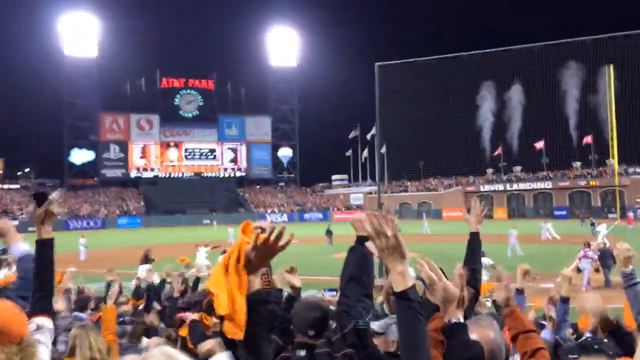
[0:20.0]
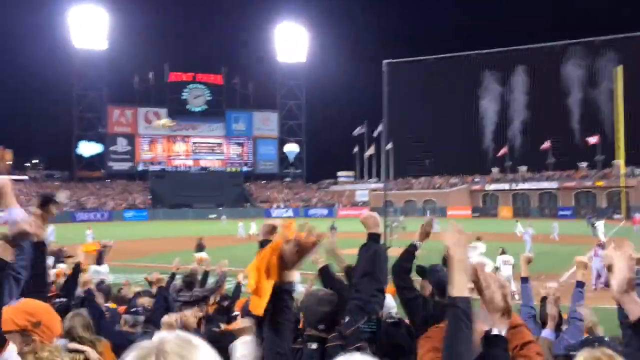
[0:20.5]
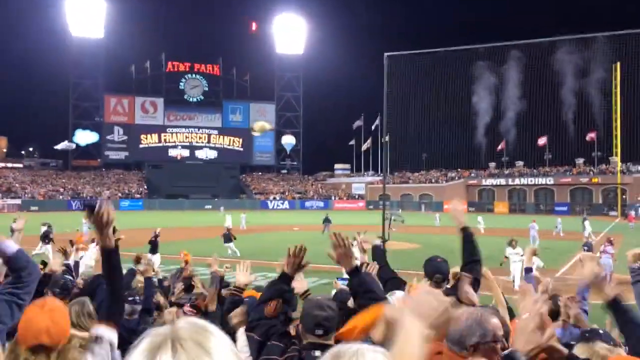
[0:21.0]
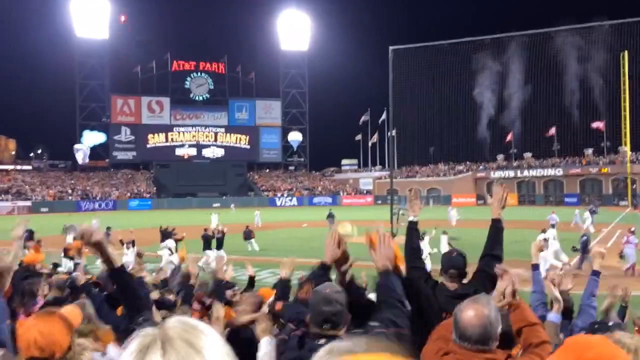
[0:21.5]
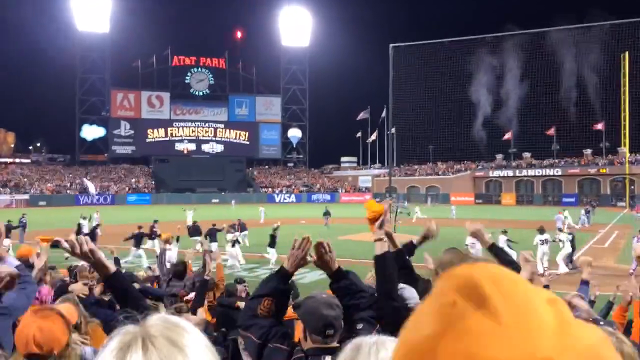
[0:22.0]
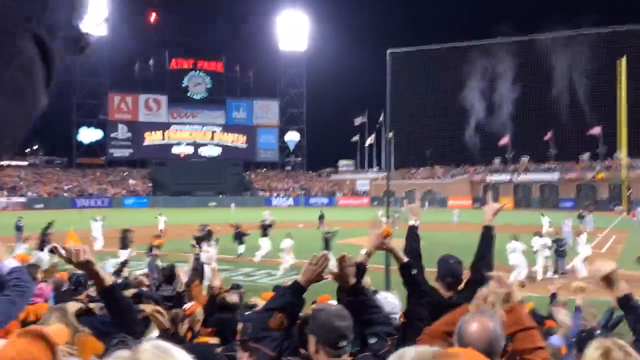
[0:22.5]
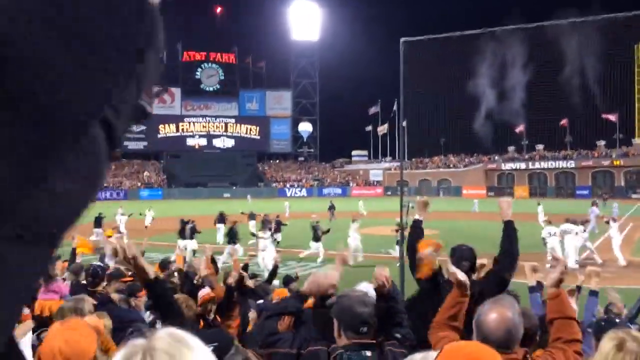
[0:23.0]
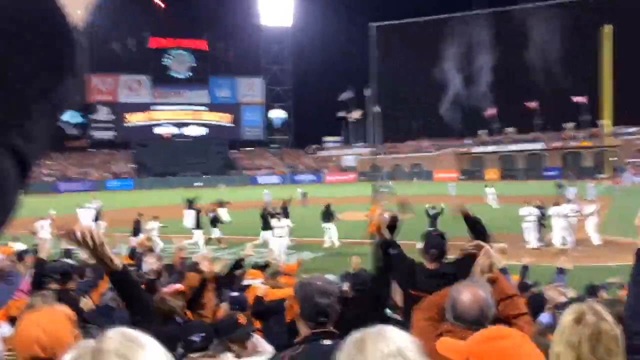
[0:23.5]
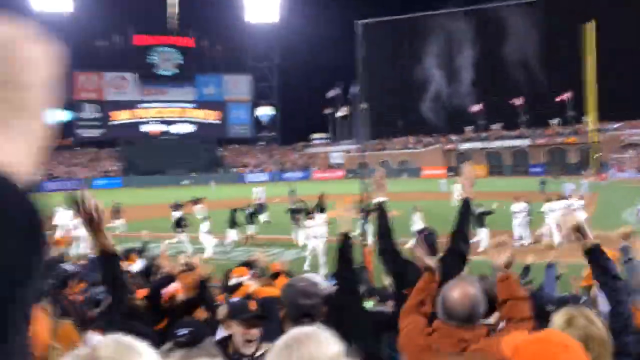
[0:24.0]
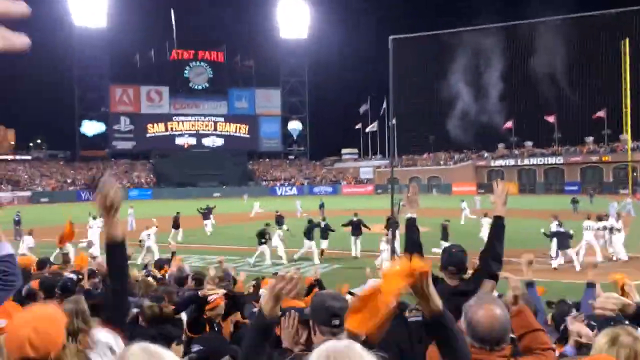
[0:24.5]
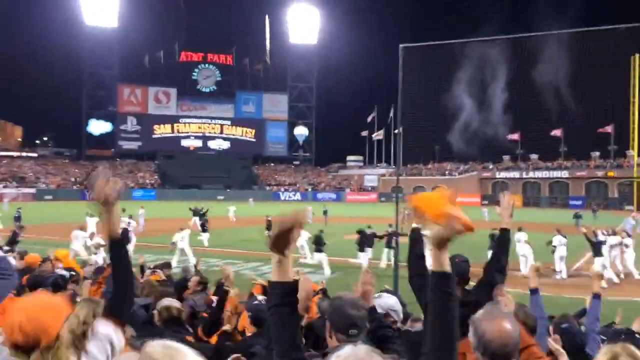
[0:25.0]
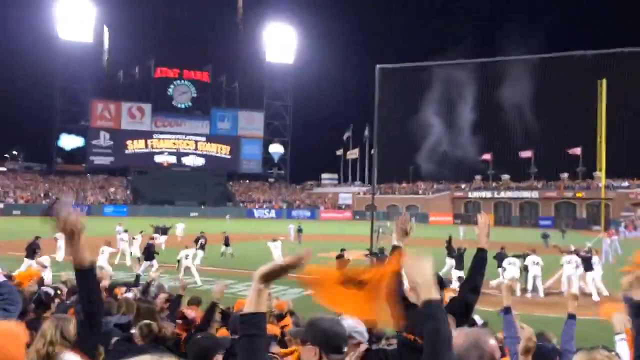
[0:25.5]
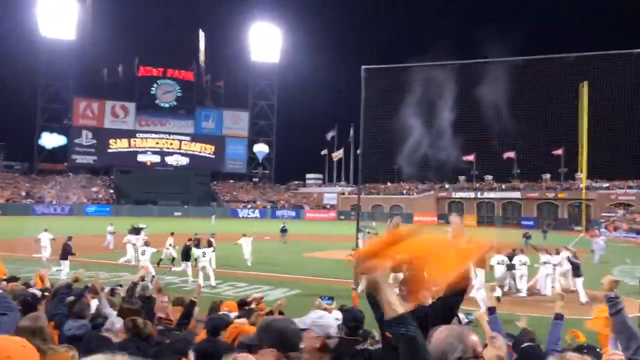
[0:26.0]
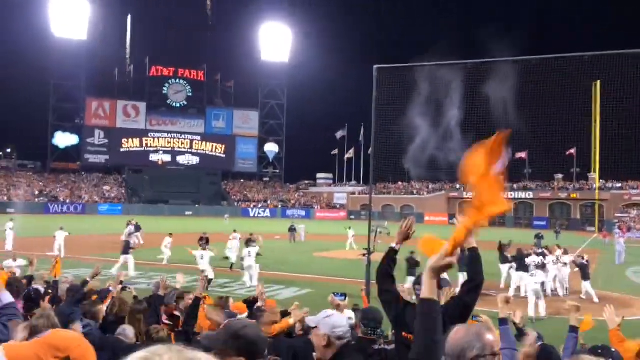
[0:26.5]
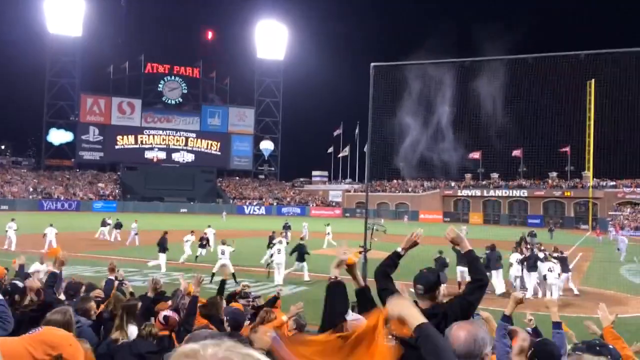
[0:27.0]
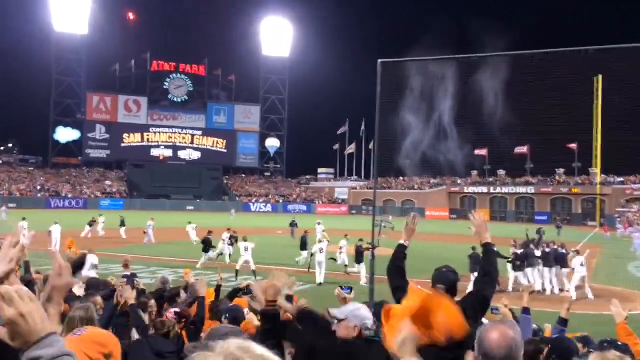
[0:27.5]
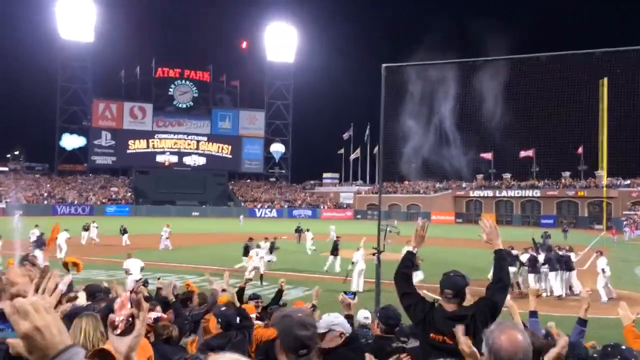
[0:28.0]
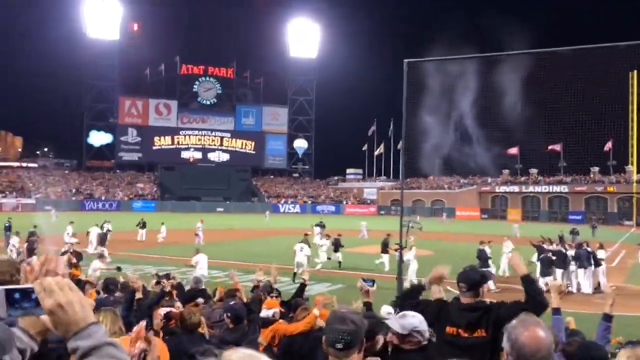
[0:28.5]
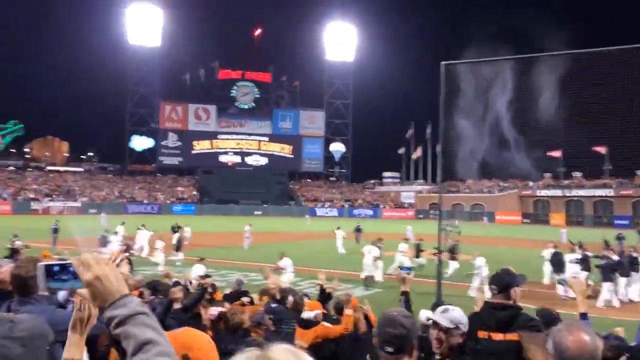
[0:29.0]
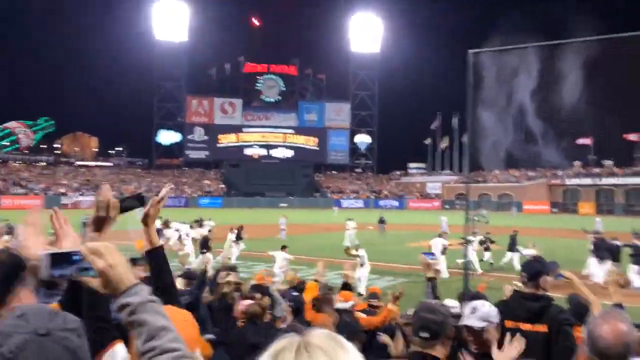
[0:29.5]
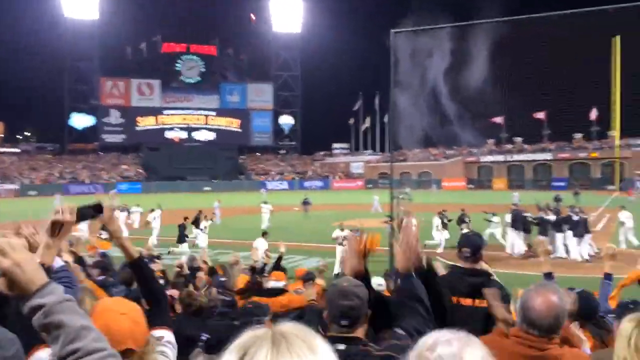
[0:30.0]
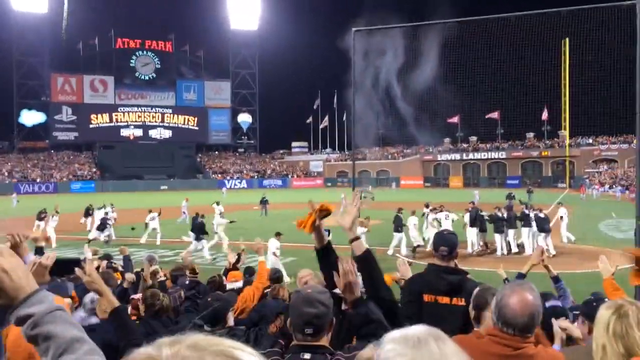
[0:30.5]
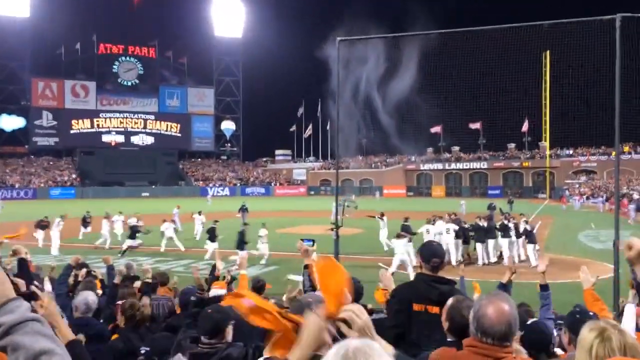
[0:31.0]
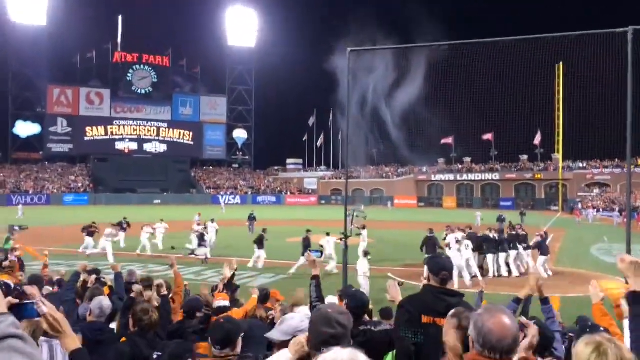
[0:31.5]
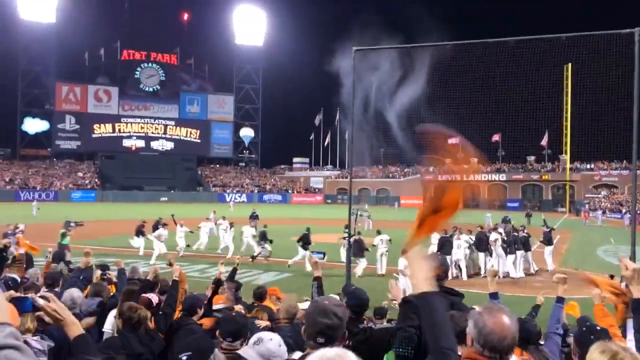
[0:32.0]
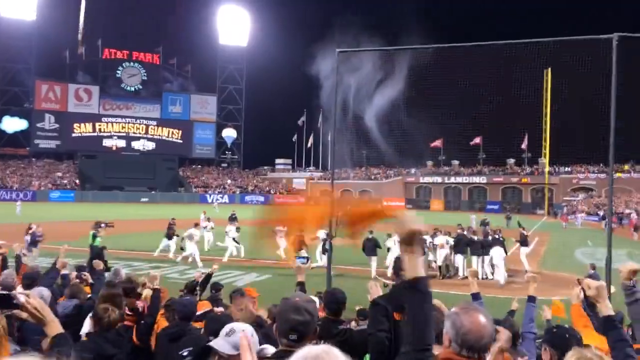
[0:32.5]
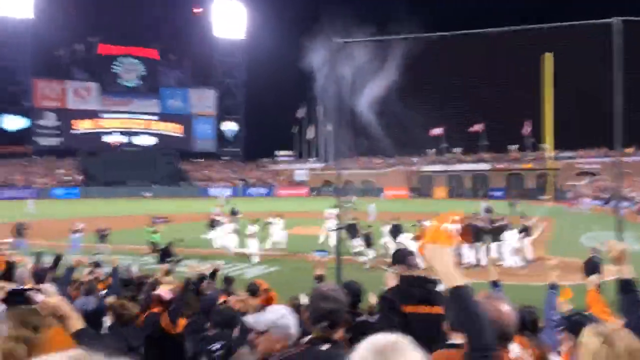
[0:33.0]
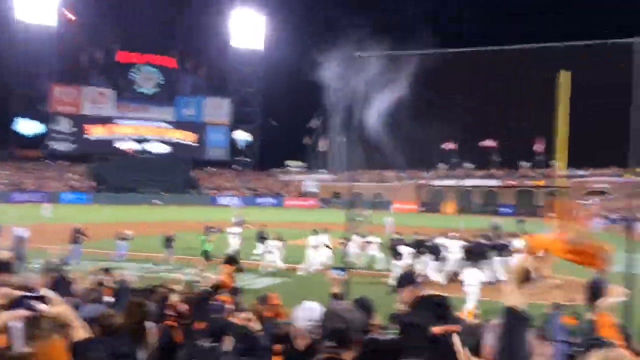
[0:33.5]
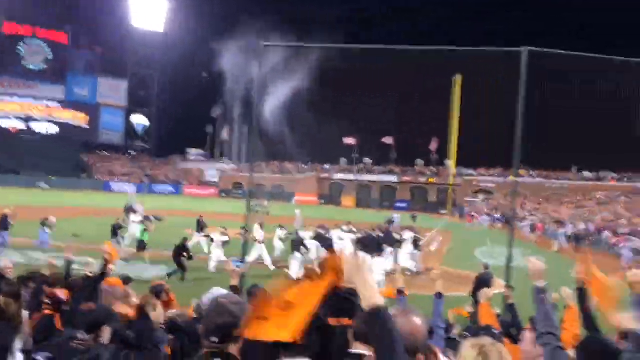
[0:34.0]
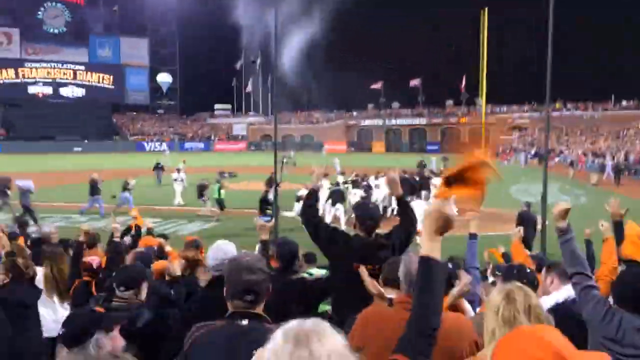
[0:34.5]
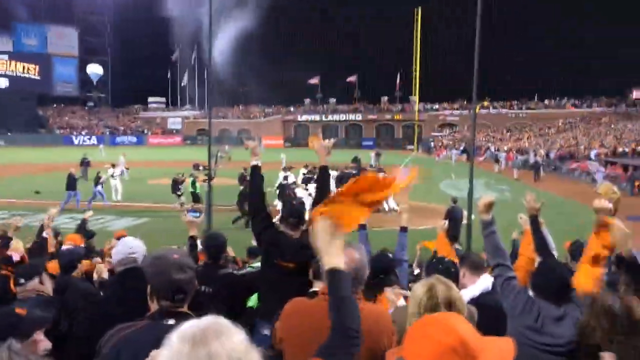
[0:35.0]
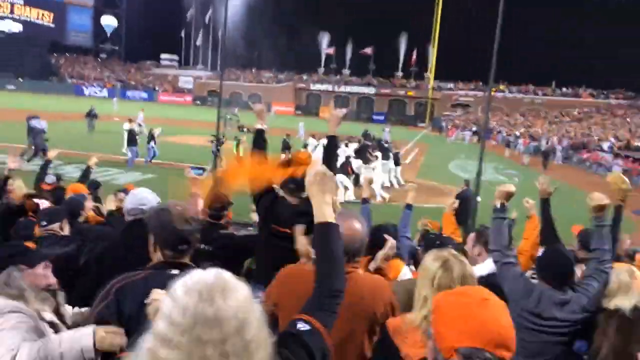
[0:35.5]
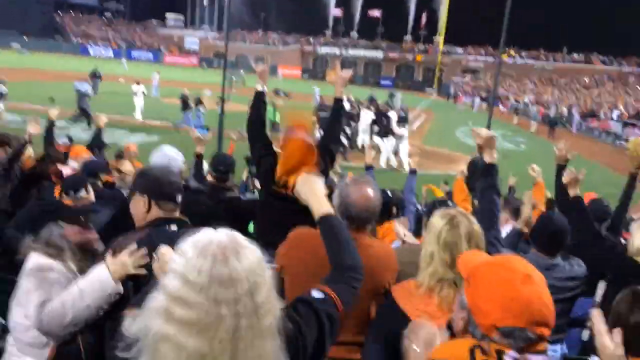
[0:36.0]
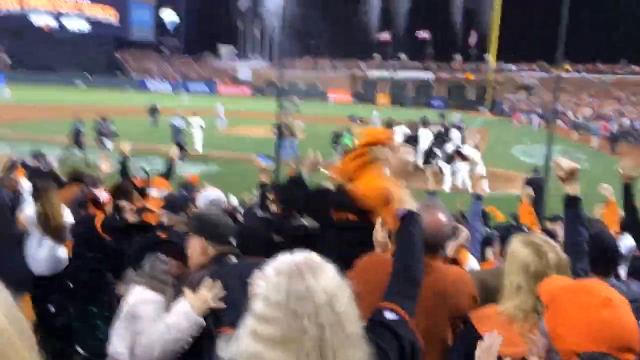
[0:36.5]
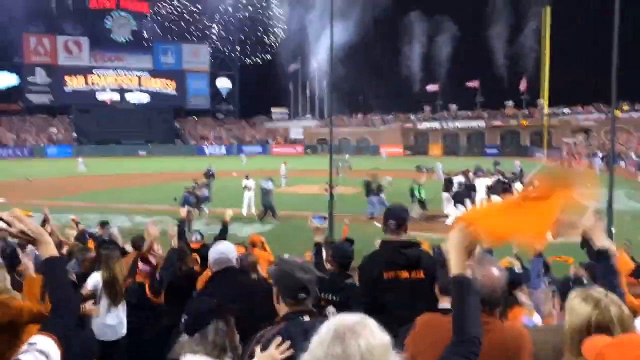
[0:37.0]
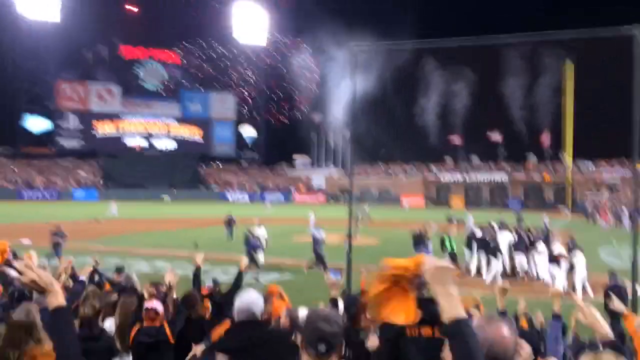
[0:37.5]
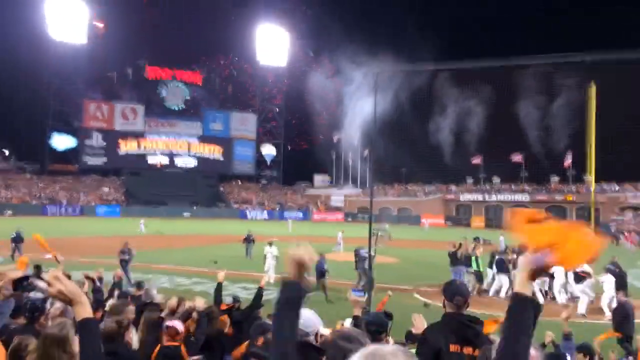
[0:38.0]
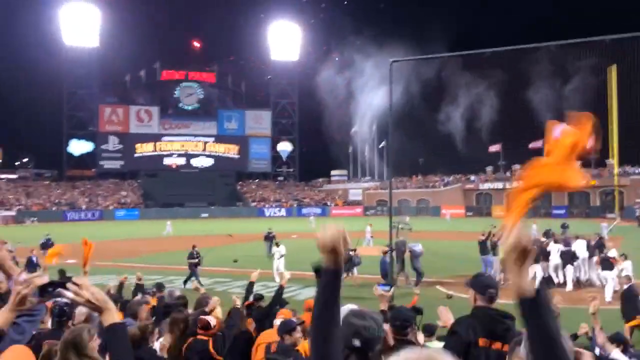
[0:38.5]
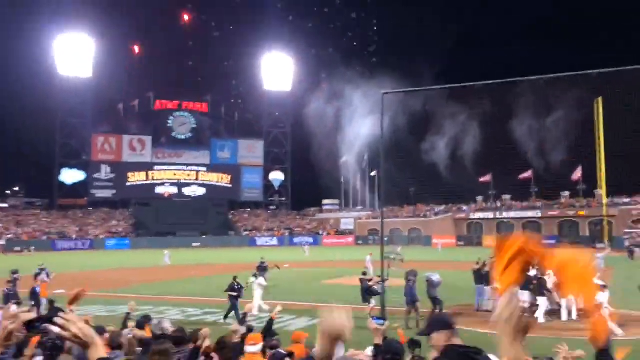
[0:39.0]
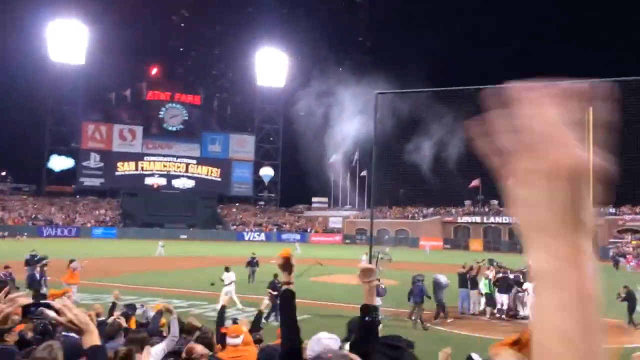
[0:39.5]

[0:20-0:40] The man apparently hits a home run. The entire baseball team plus several other people run onto the field, where they hug and pile up on each other. Fireworks go off in the background and there is something like smoke. People throw their hats and throw and swing shirts around, and several people have orange shirts or orange towels. One person who looks like a male is recording the scene. A sign says "congratulations San Francisco Giants", and the Giants appear to have won the game, with the team and fans celebrating.